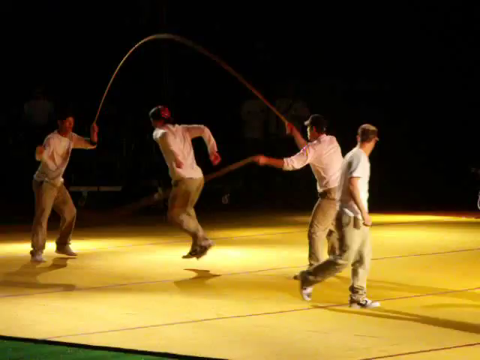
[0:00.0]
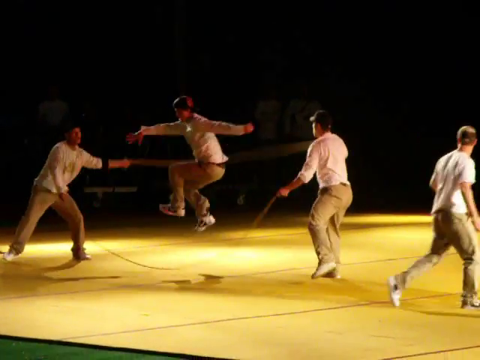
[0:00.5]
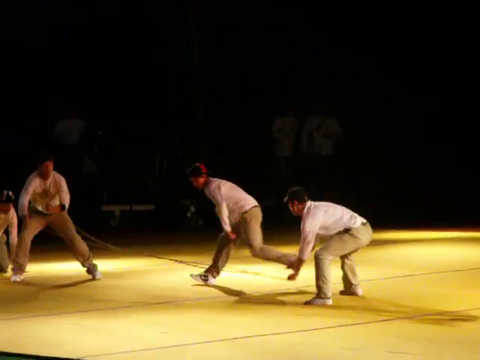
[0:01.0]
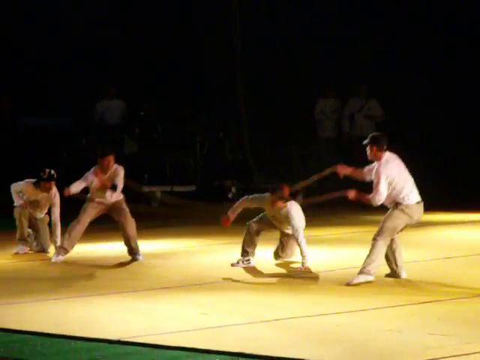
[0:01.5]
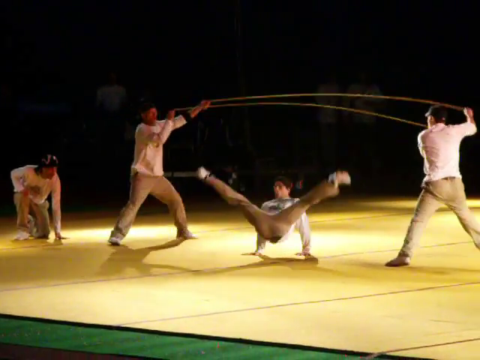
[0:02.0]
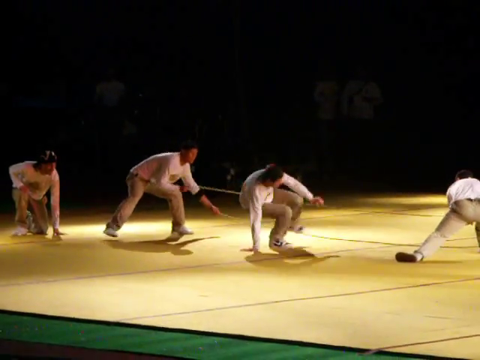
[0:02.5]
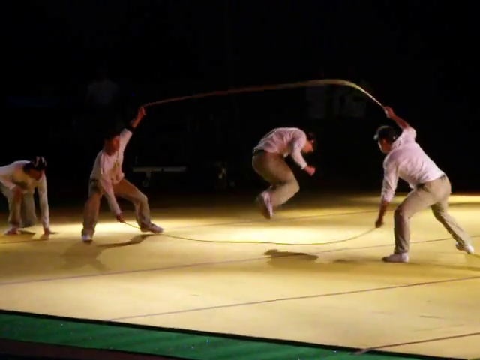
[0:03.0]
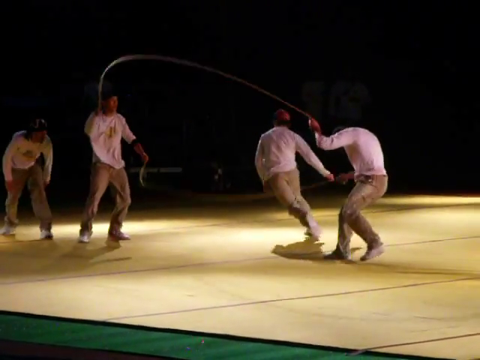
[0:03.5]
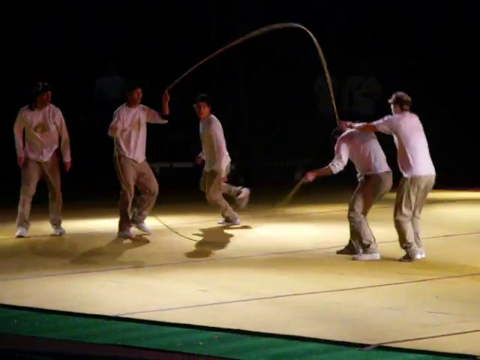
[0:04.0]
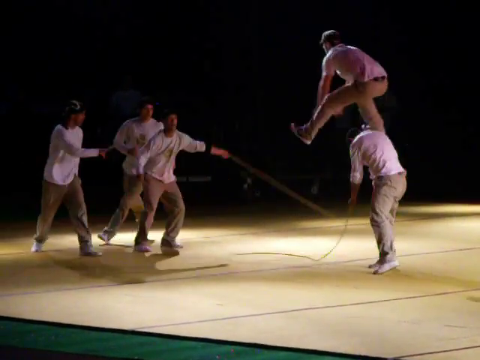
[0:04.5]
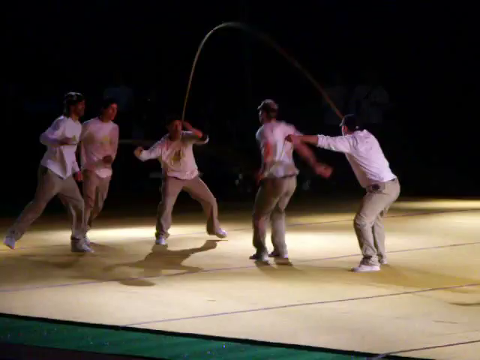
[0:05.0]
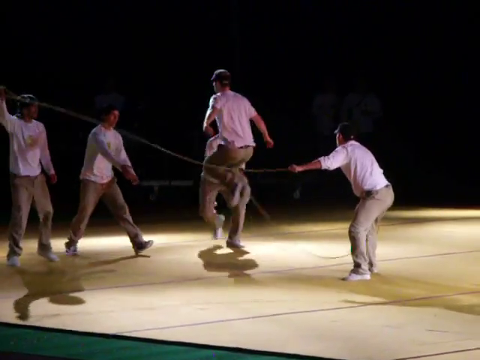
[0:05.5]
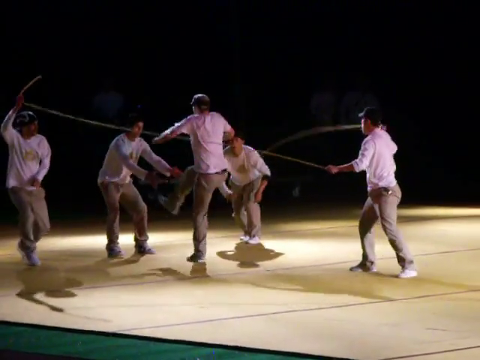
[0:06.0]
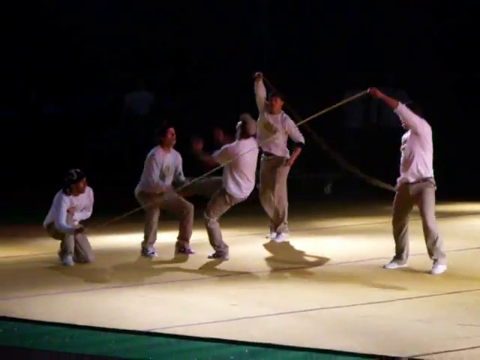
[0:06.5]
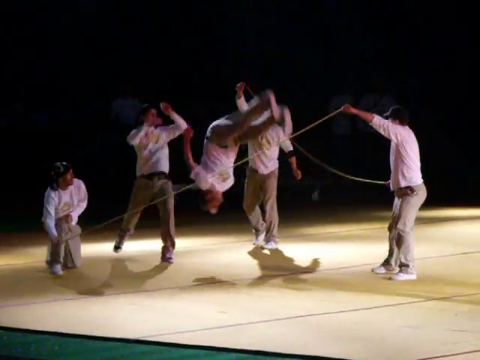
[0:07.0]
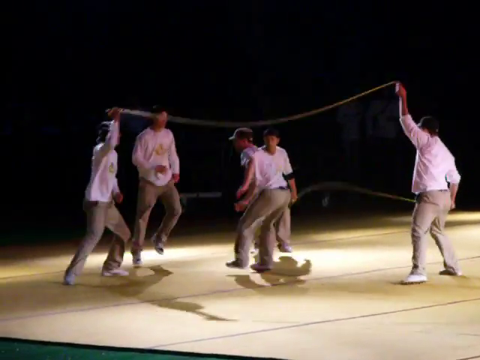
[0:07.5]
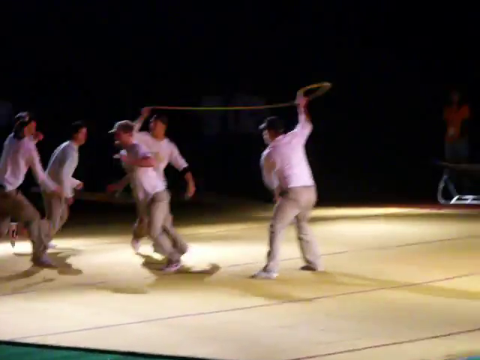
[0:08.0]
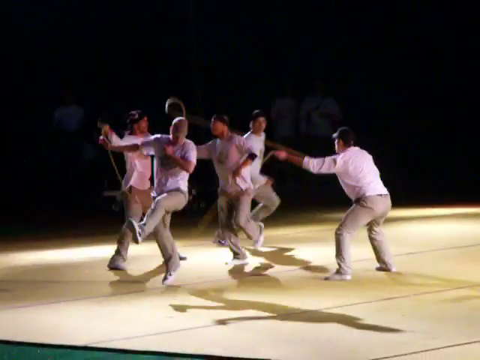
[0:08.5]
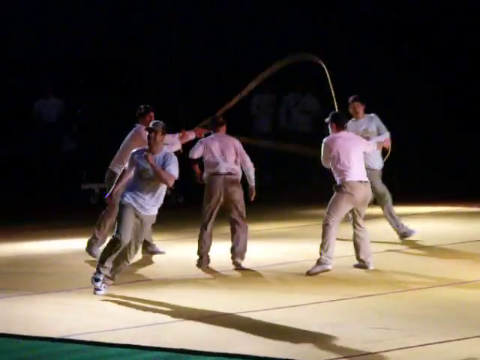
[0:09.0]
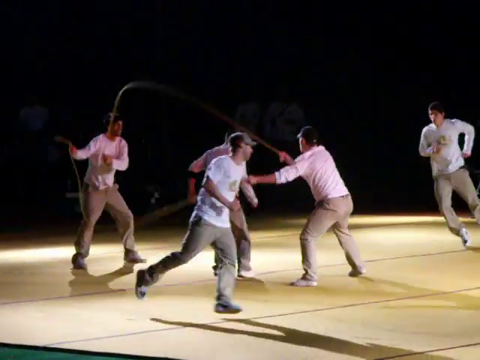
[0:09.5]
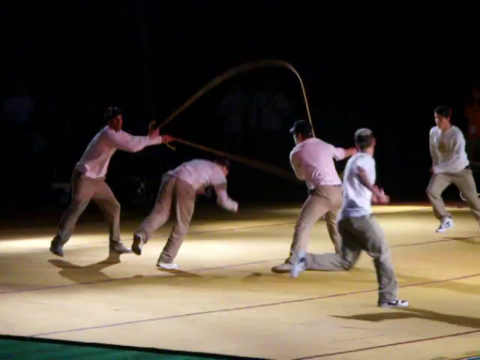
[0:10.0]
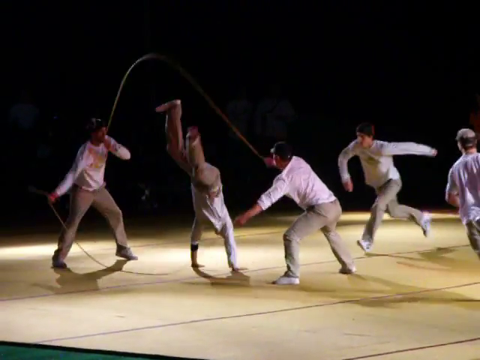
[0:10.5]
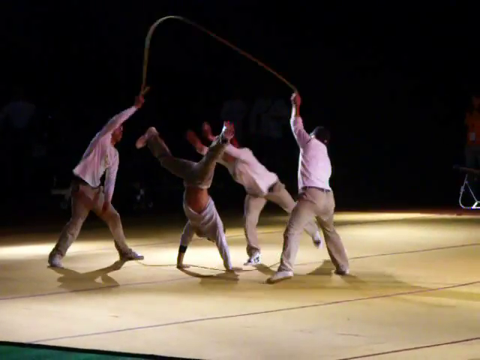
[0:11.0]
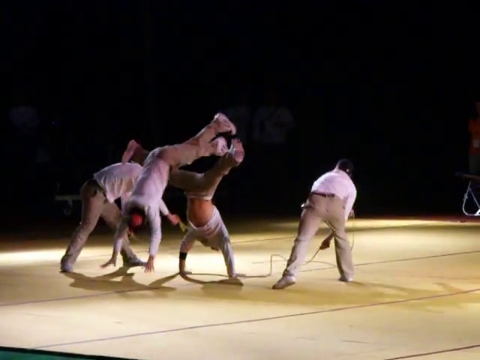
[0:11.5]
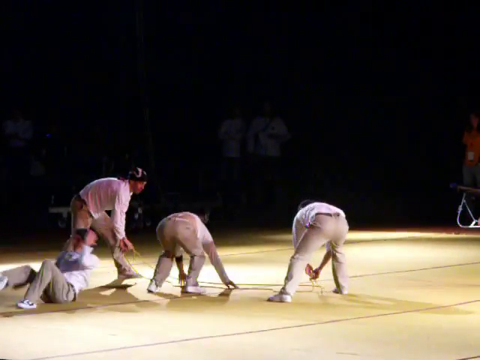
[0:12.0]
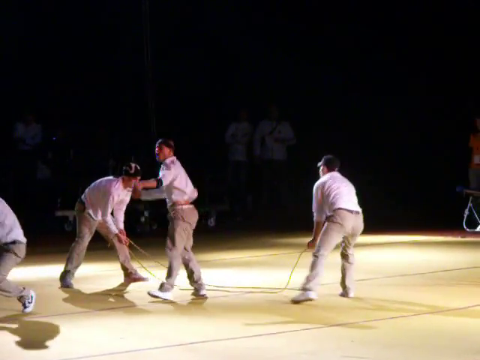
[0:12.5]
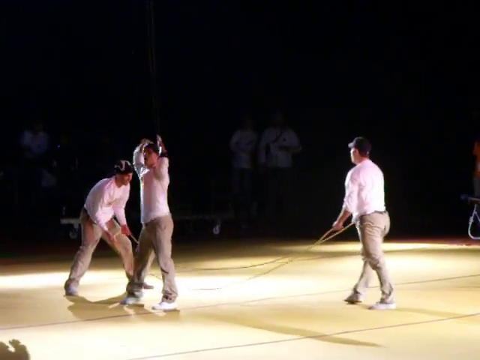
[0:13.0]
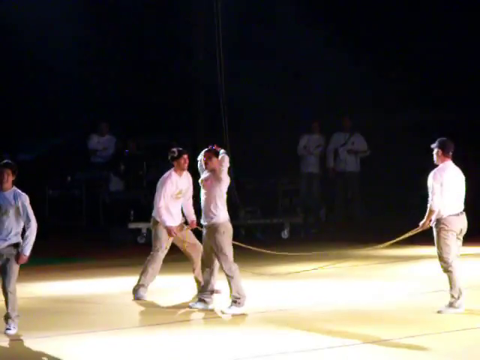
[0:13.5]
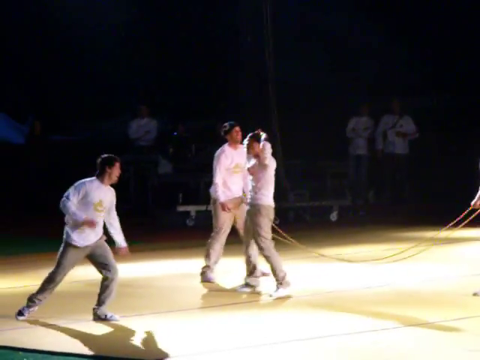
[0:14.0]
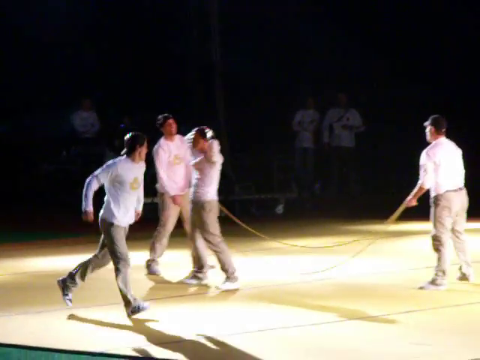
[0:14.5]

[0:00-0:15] What appears to be a double Dutch performance takes place on a gym-style floor. The performers all wear long-sleeved white shirts, khaki pants and baseball caps. The background is fairly dark, making the performers' features hard to see, but they add b-boy style moves and flips to the double Dutch. The first move involves a kind of roll on the floor, then one man jumps over the head of one of the men turning the ropes. One performer does a backflip and another does a handstand while one climbs over the top of it. The performance seems to end when one of the men puts his hands up behind his head and does a little humping motion, which seems possibly to be a celebratory ending pose for the routine.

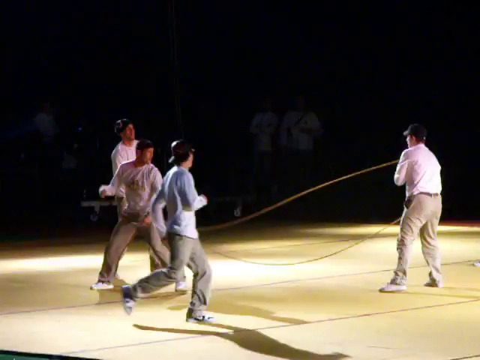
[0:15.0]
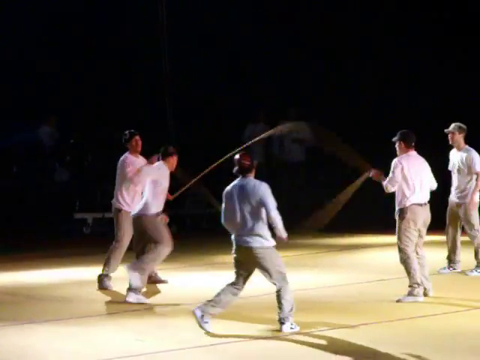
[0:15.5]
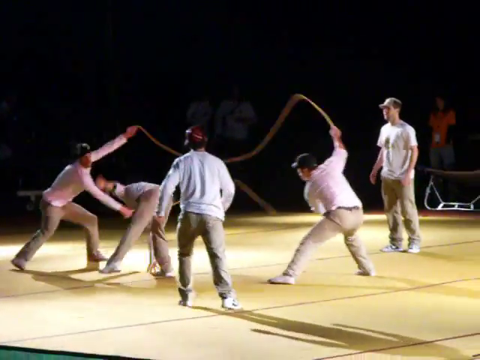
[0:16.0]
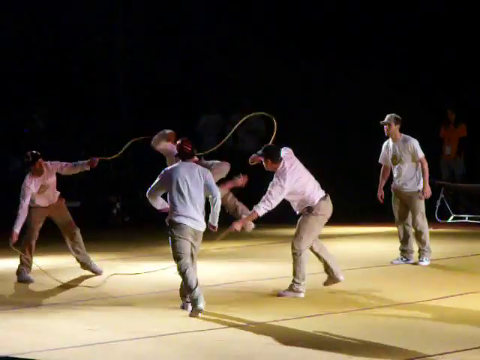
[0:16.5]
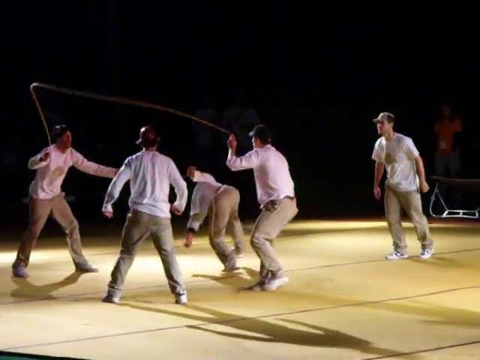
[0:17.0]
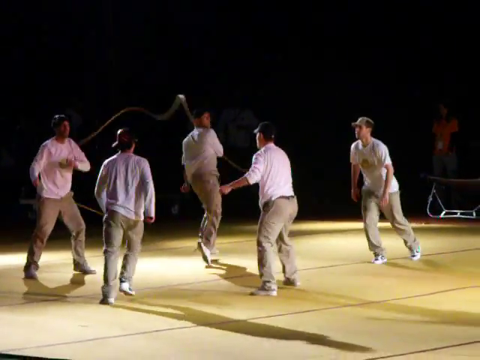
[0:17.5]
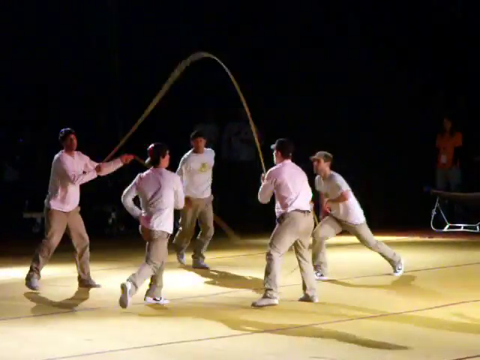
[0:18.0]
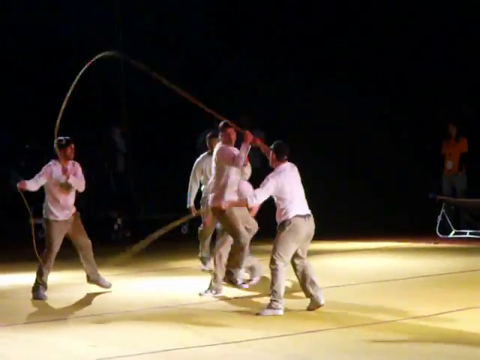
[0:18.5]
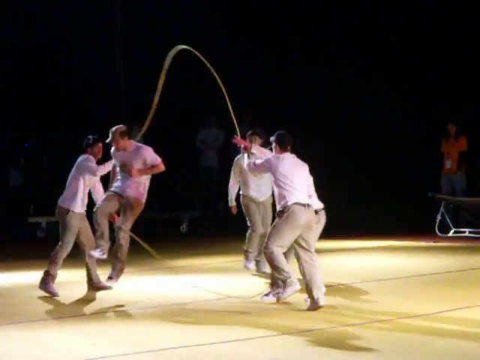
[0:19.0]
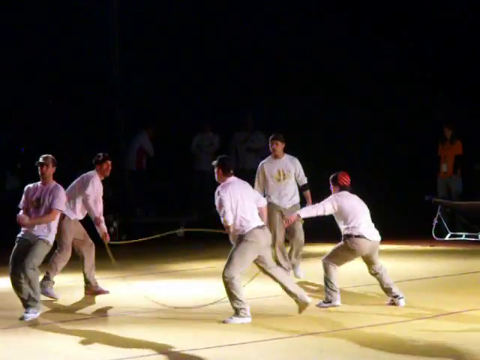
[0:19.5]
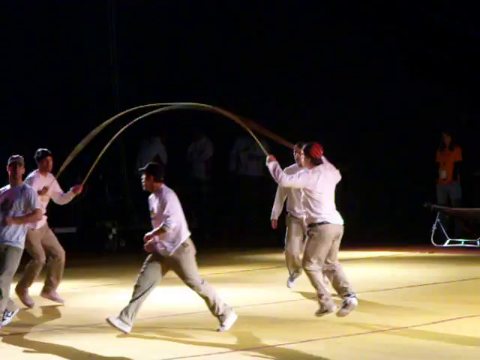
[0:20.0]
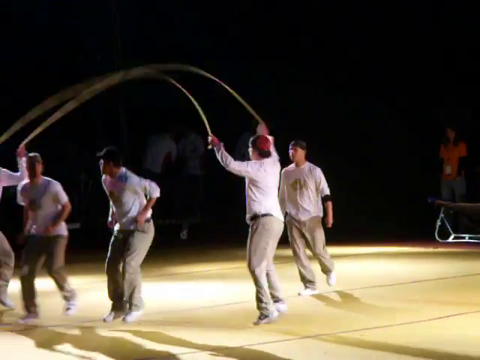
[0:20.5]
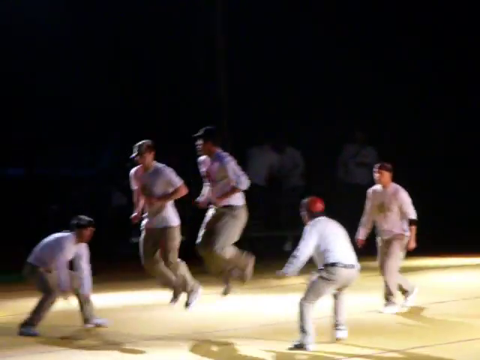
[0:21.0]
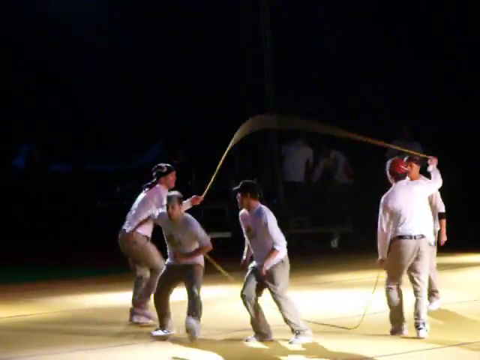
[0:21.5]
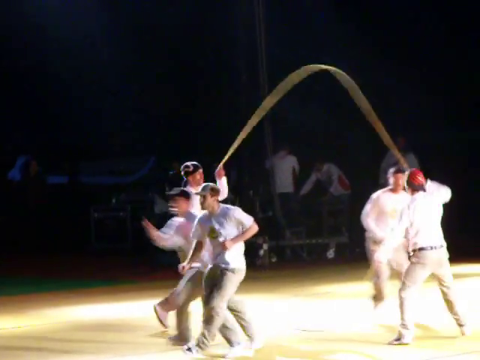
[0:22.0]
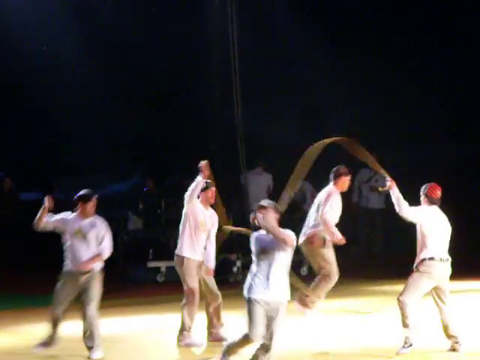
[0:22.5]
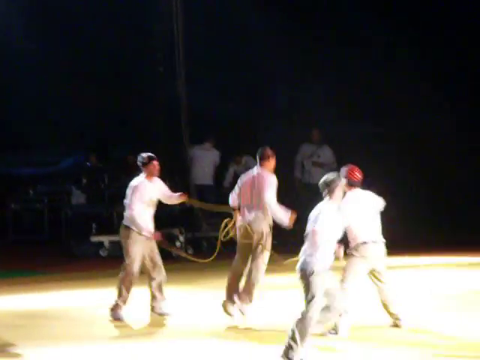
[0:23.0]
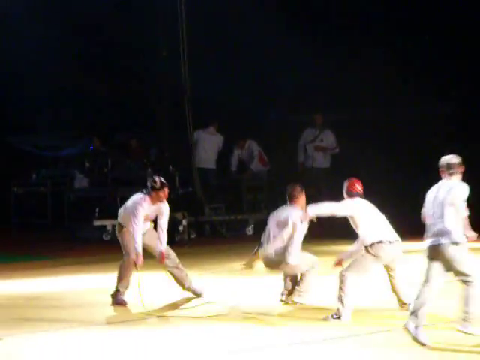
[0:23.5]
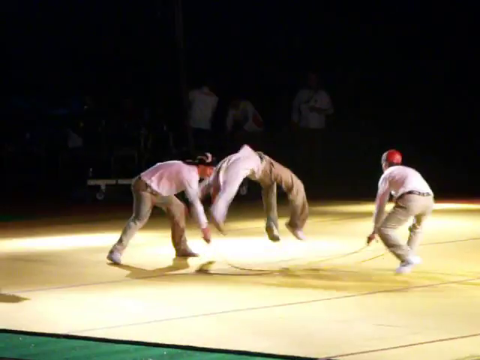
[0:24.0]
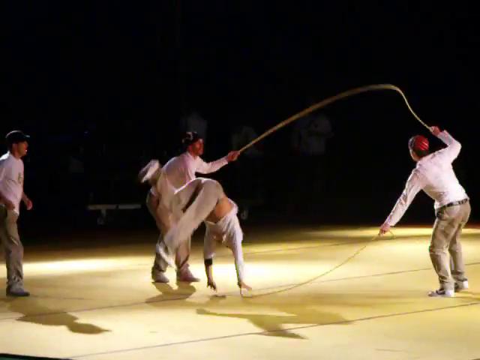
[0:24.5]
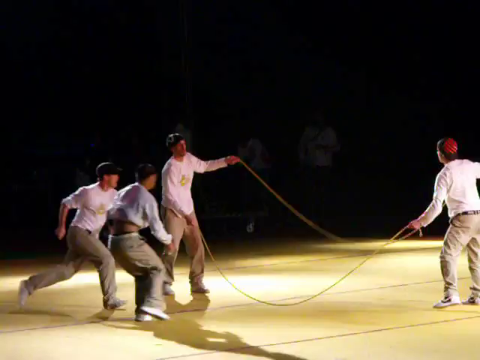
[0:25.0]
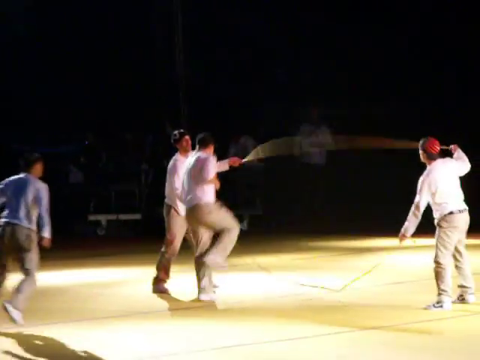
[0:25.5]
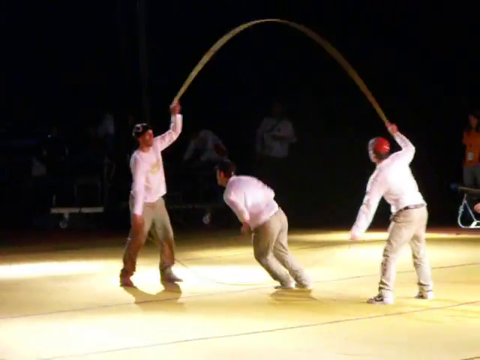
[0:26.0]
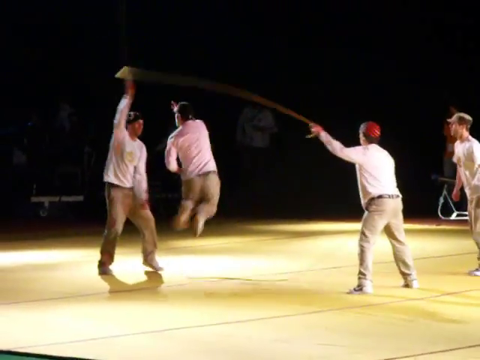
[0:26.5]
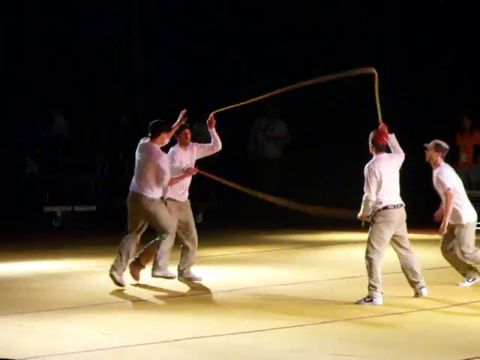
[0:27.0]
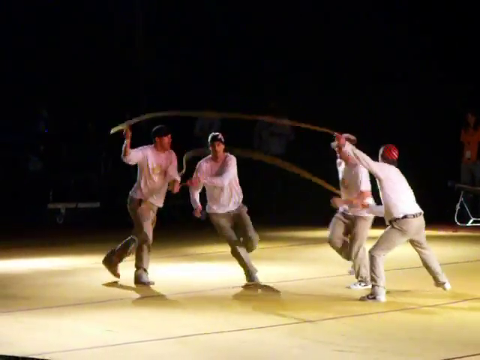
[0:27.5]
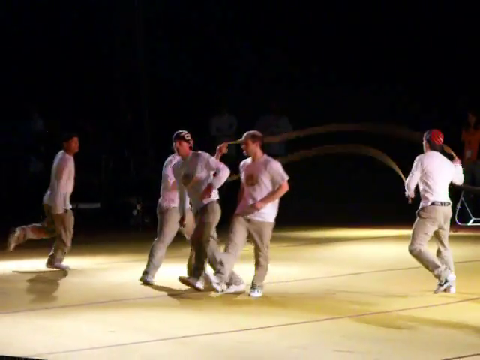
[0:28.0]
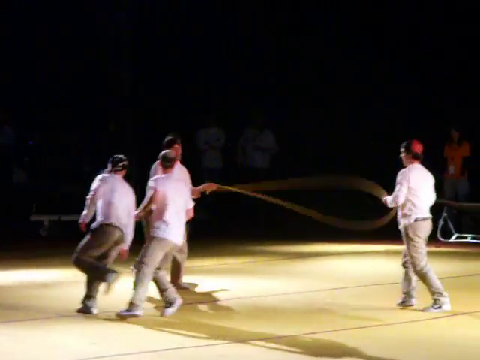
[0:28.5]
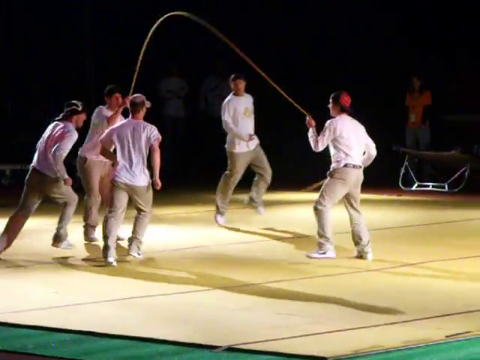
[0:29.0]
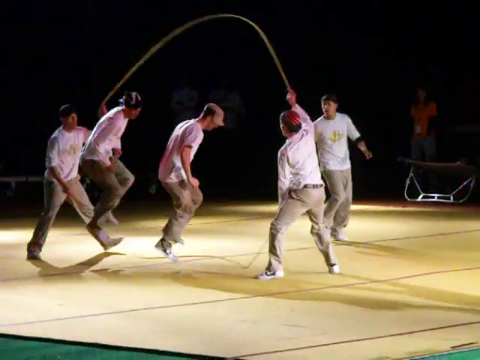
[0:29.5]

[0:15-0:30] The performance continues as several performers jump in and out until two are jumping in the center at the same time. Someone does a backflip over both ropes, followed by another team member swapping places with one of the rope turners. At the very end, two teammates go in and kneel together. This may be a slightly different performance, as one teammate wears a short-sleeved shirt. The white shirts they all wear have some kind of logo or insignia in the center, and they all appear to wear black and white tennis shoes. A little more of the background is visible beyond the black, with flashes of various bystanders.